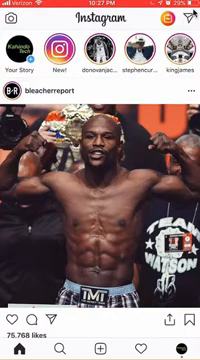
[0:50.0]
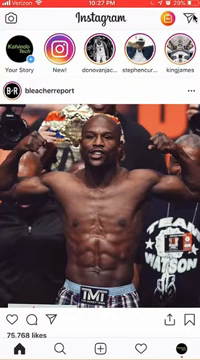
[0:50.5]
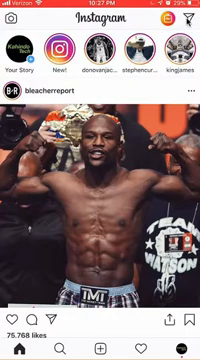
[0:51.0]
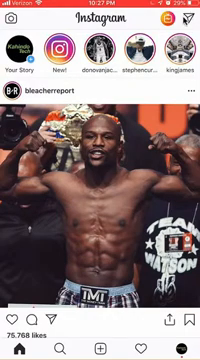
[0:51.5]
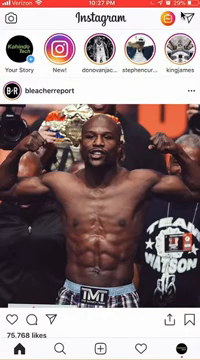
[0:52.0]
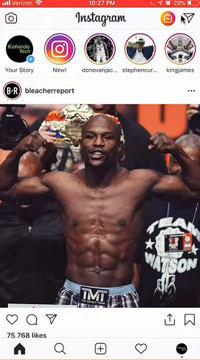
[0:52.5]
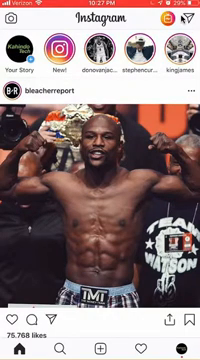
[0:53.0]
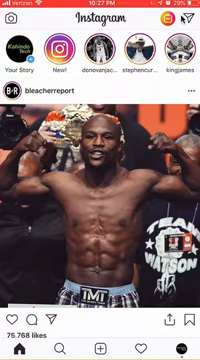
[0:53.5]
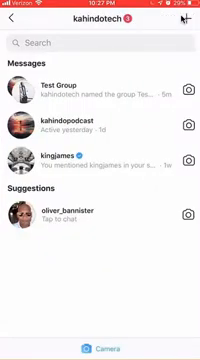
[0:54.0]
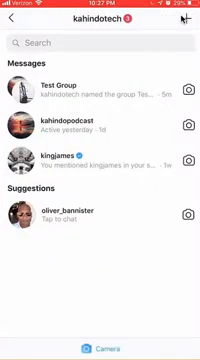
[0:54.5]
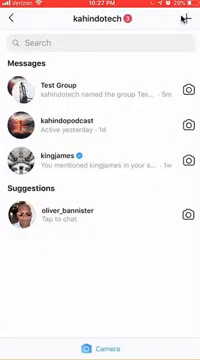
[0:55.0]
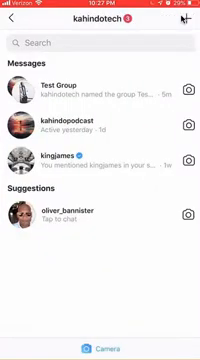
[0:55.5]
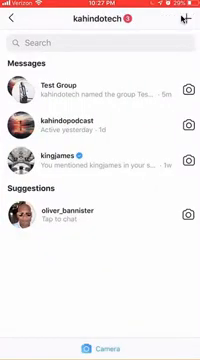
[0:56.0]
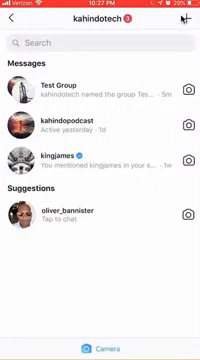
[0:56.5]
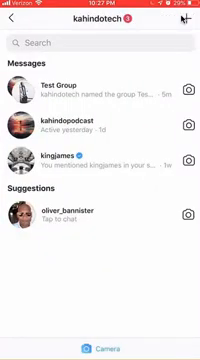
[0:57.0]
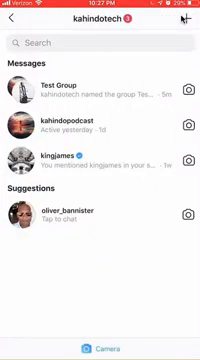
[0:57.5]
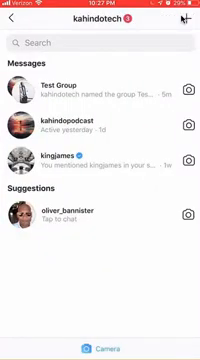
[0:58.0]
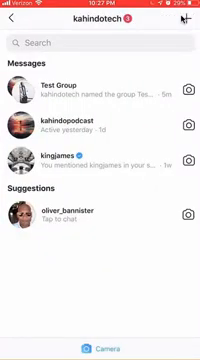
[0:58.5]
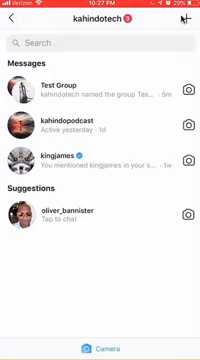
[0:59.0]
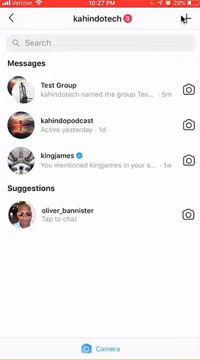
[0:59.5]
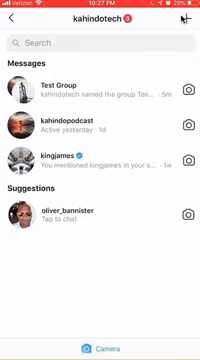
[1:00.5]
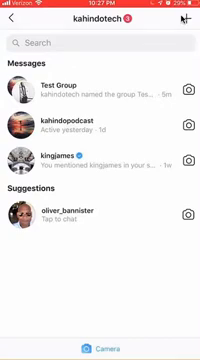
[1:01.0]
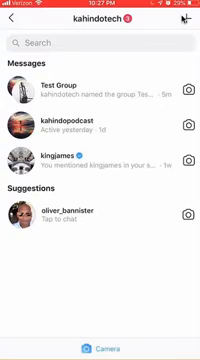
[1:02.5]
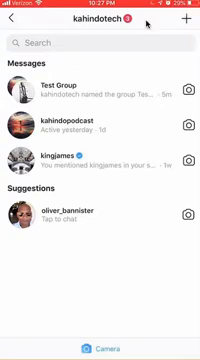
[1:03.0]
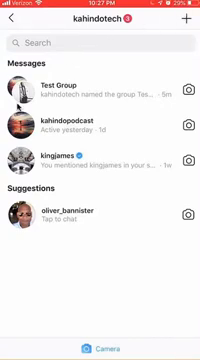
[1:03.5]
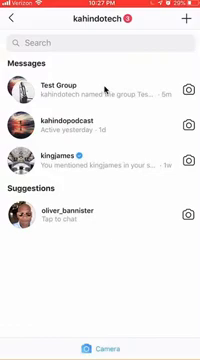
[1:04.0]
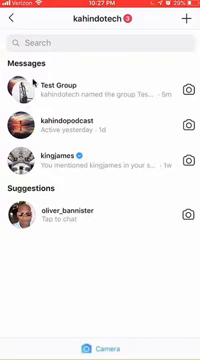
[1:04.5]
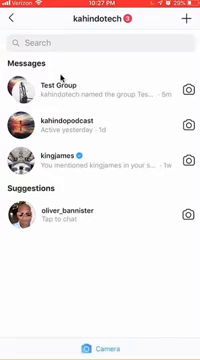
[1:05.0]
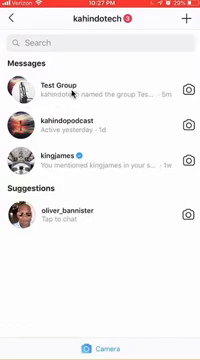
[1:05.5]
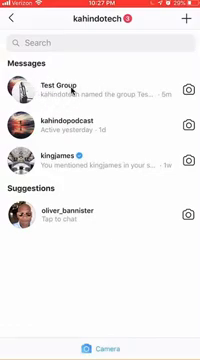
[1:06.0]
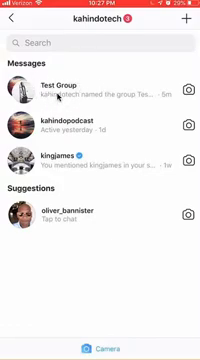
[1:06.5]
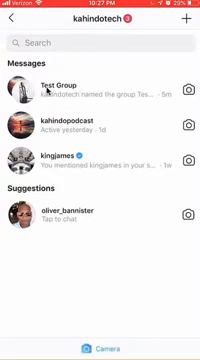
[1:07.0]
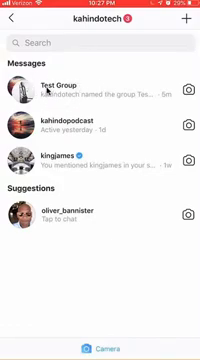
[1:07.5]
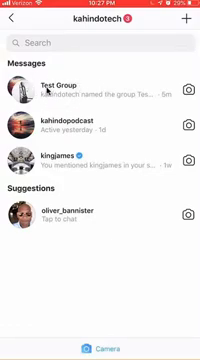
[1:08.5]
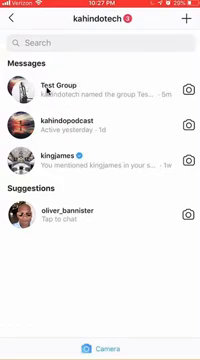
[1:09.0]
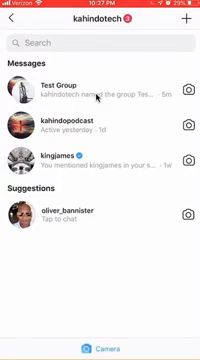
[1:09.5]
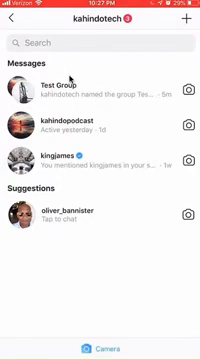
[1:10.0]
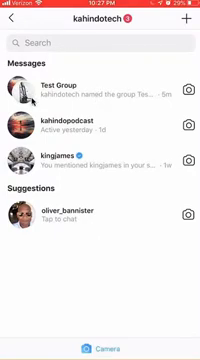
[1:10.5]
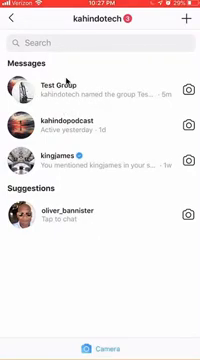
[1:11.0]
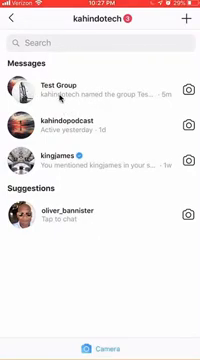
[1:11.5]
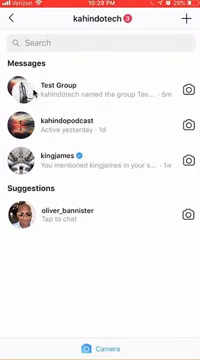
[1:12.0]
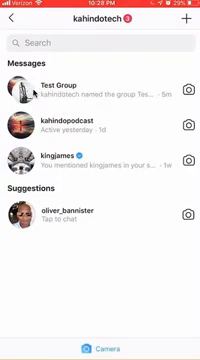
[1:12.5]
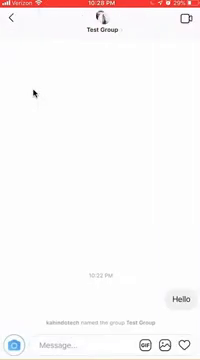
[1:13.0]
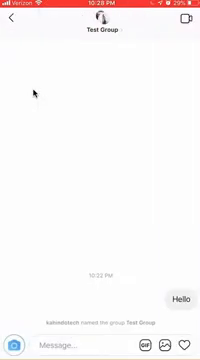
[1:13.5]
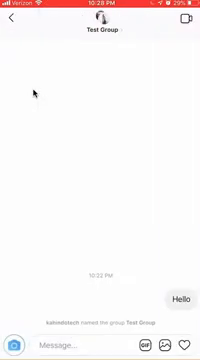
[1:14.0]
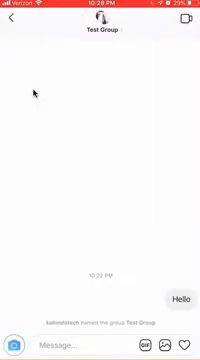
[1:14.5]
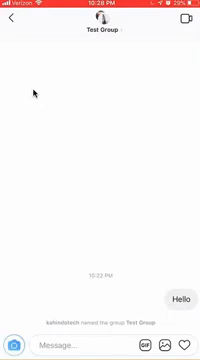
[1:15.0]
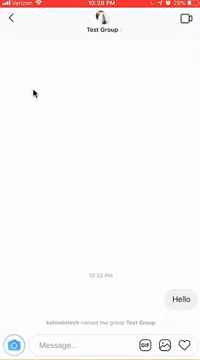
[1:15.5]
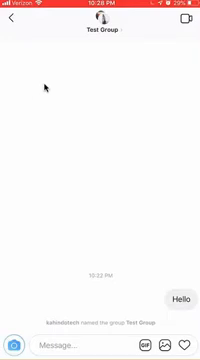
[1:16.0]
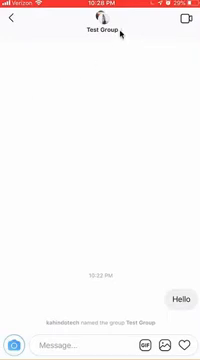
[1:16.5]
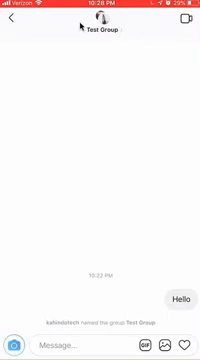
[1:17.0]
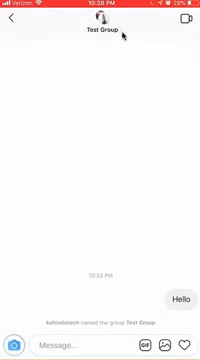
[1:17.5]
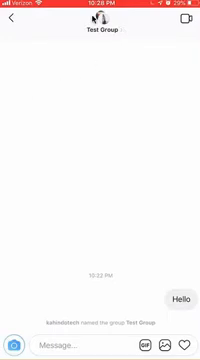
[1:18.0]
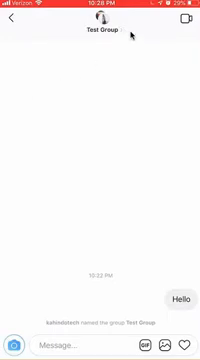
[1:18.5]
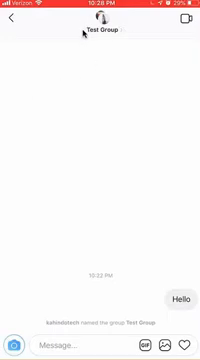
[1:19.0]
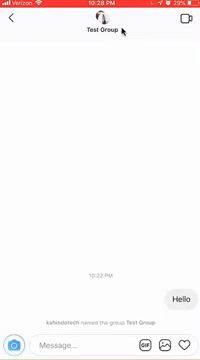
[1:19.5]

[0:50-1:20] An Instagram post shows the young Black man wearing a shirt with "TNT" written on it, and a man standing next to him wears a t-shirt with "T16" written on it; they are wearing black and white. The cursor then moves to a group, goes around there, clicks, and enters it.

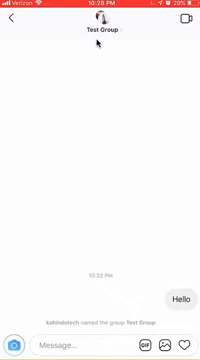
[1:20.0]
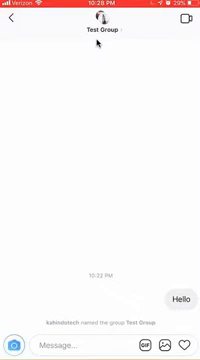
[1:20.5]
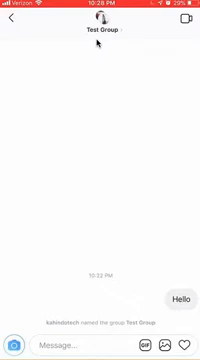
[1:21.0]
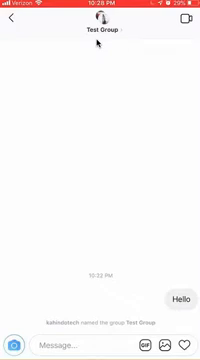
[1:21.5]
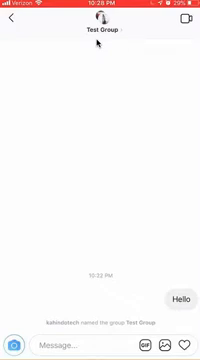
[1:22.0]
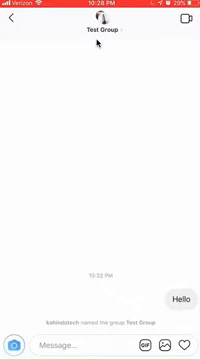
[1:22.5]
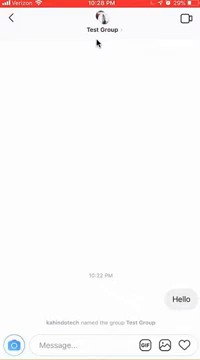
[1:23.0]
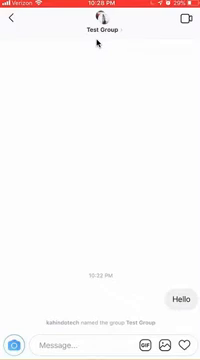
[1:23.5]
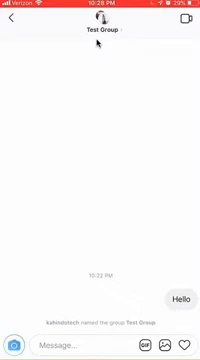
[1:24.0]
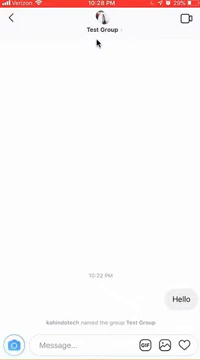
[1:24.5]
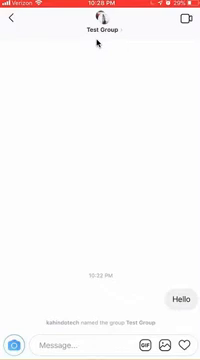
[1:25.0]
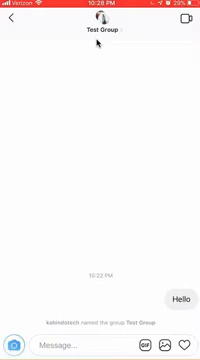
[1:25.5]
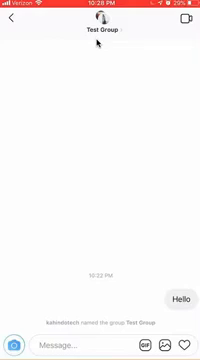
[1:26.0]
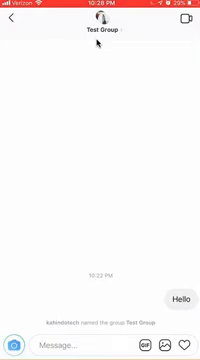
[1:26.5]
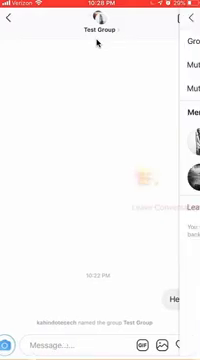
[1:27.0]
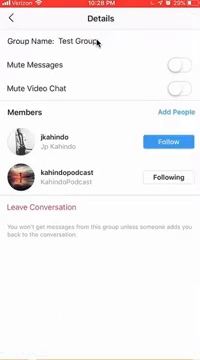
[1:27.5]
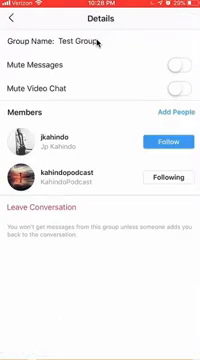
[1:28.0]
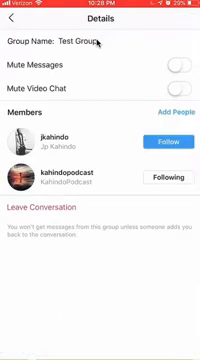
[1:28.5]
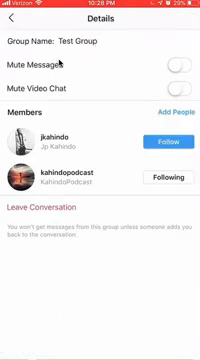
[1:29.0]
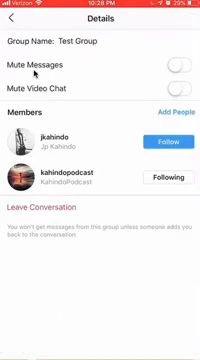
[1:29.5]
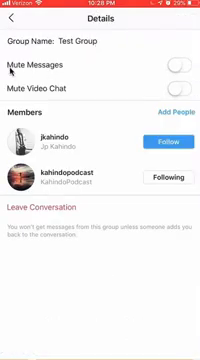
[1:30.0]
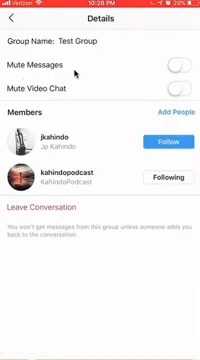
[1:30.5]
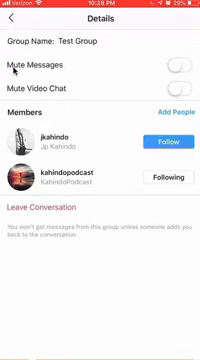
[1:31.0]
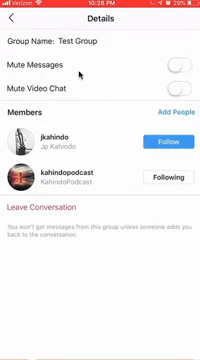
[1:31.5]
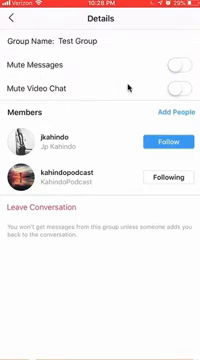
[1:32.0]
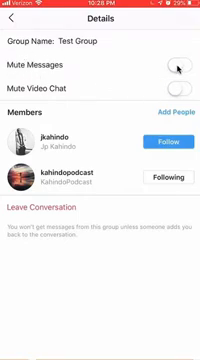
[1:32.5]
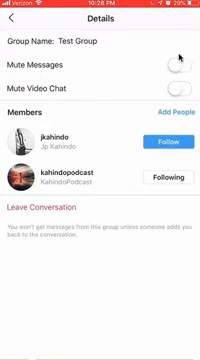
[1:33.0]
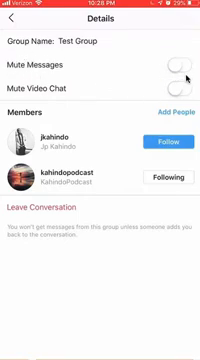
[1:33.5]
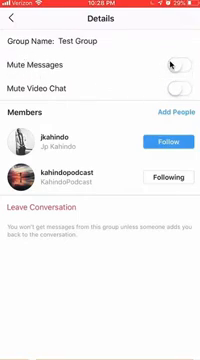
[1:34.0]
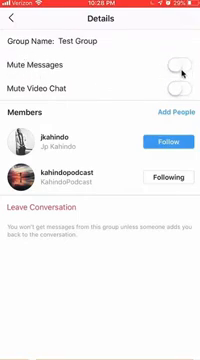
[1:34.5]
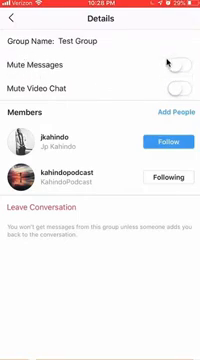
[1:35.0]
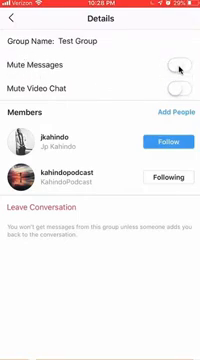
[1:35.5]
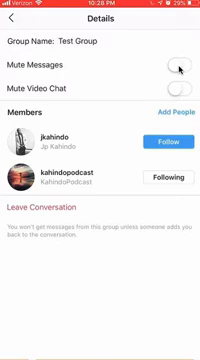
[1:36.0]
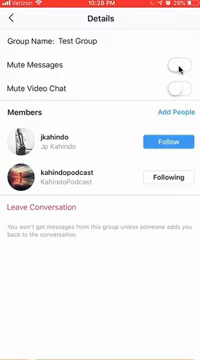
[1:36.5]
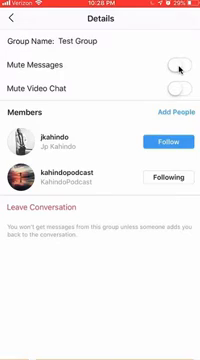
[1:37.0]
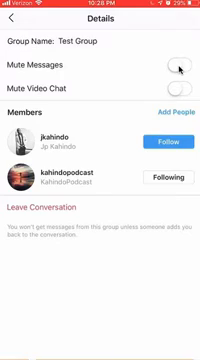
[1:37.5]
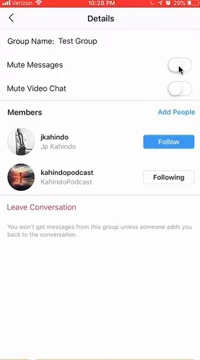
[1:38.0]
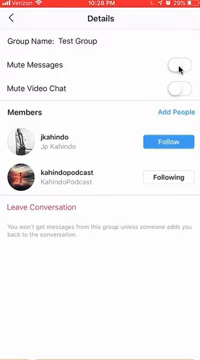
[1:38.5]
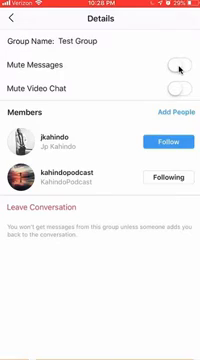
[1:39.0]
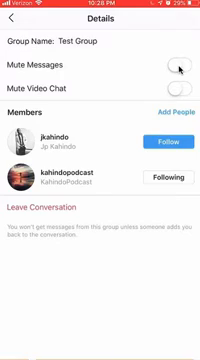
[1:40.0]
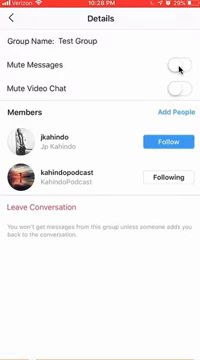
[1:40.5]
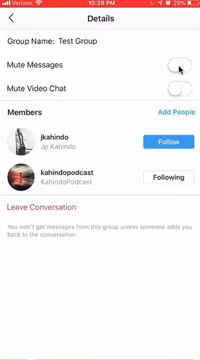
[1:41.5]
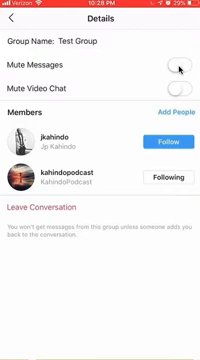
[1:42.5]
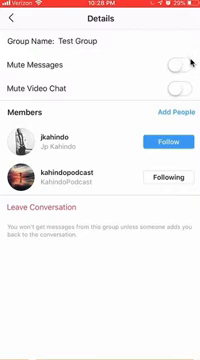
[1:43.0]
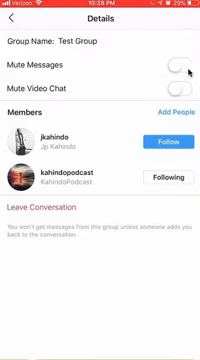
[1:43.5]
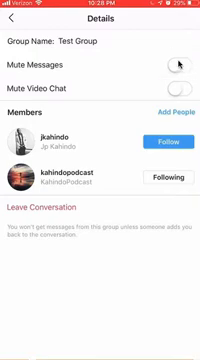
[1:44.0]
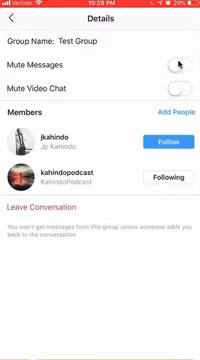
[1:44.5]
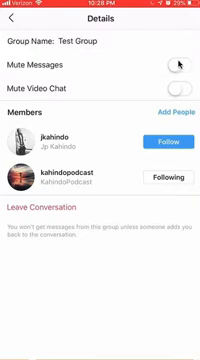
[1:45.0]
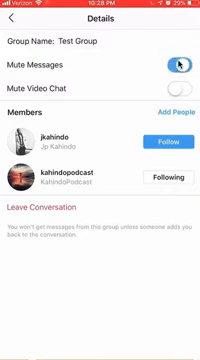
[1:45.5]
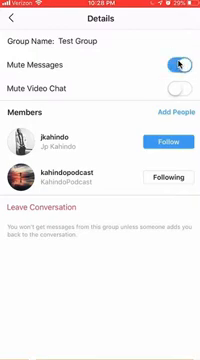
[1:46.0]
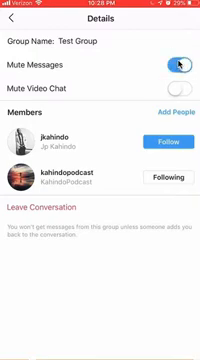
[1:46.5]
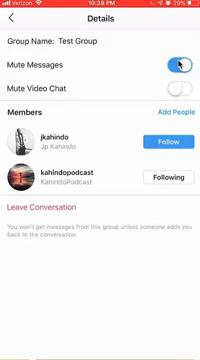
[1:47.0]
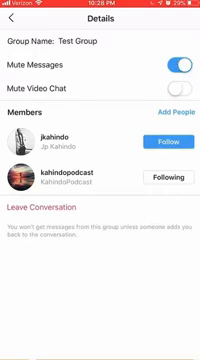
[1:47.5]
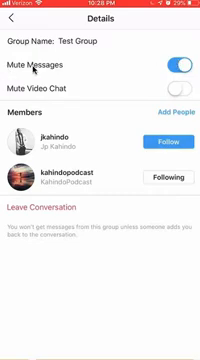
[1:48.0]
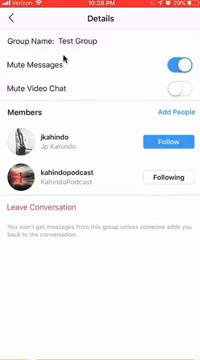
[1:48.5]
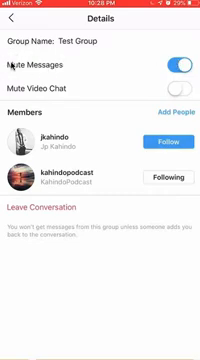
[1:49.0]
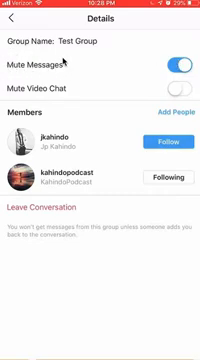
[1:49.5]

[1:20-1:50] A test group conversation is open. A message says "hello" from the test group, with no response. Text on the screen reads "you won't get messages from this group unless someone adds you back to the conversation." There is a camera option and a field to write a message, and "details" appears at the top. The time is 10:28, and a white screen shows the message was sent at 10:22.